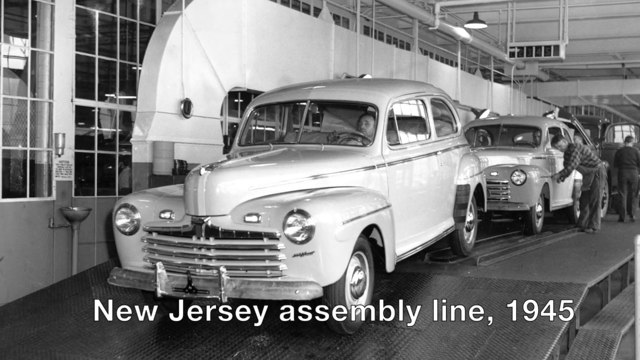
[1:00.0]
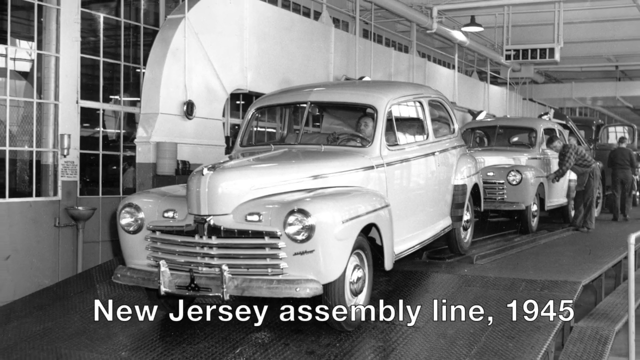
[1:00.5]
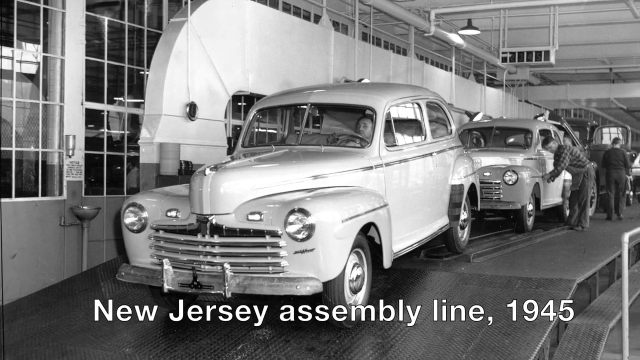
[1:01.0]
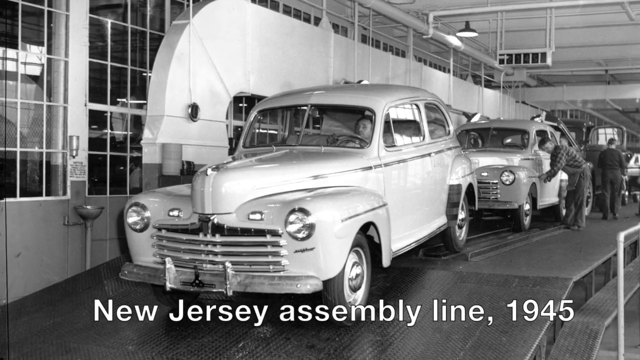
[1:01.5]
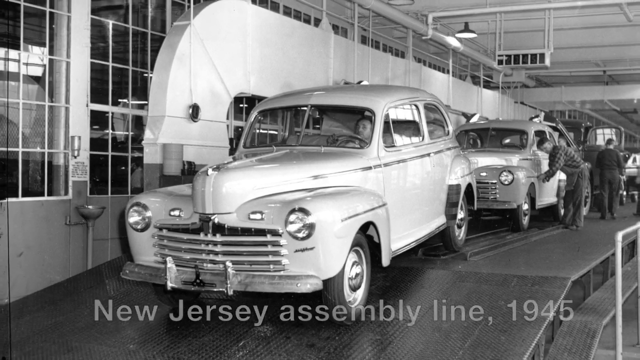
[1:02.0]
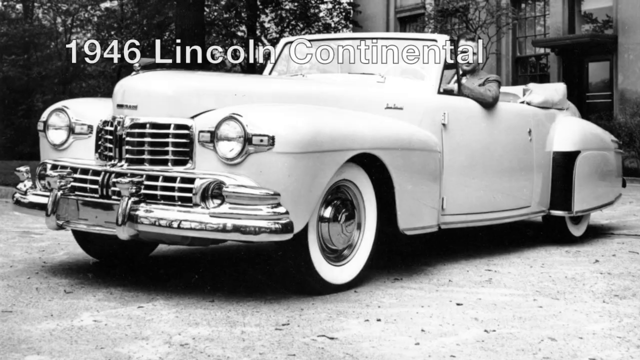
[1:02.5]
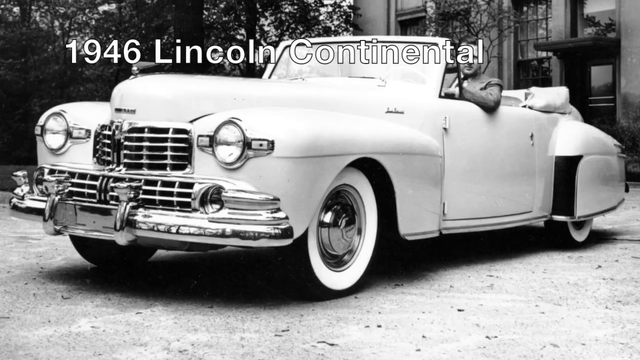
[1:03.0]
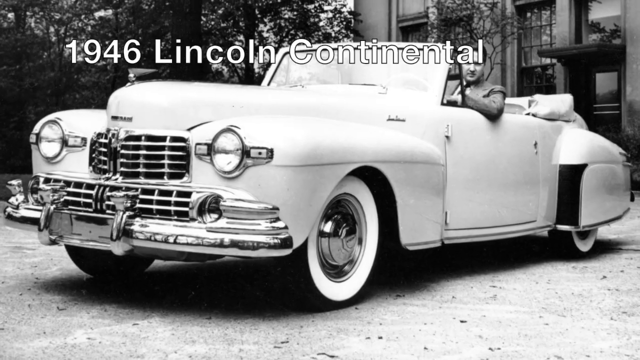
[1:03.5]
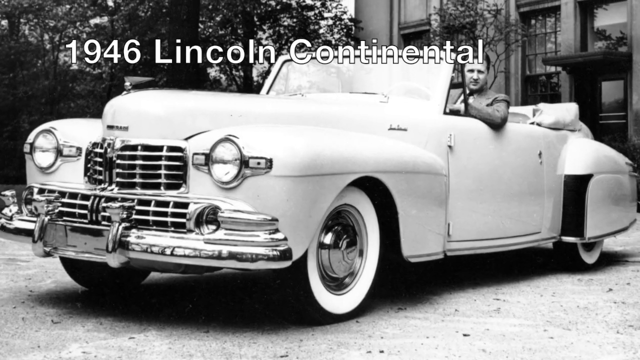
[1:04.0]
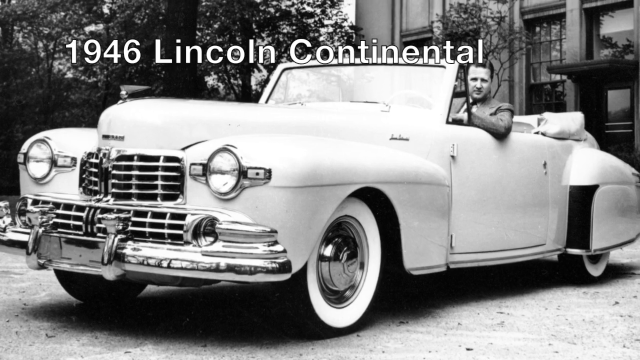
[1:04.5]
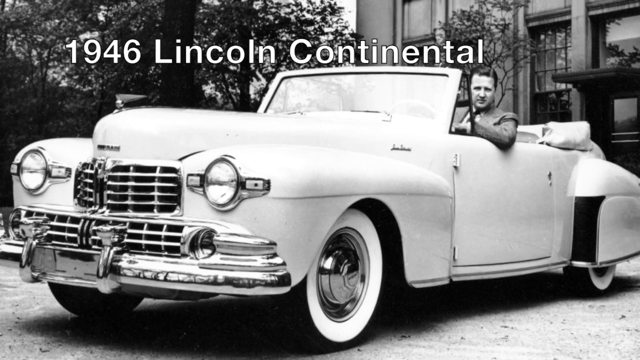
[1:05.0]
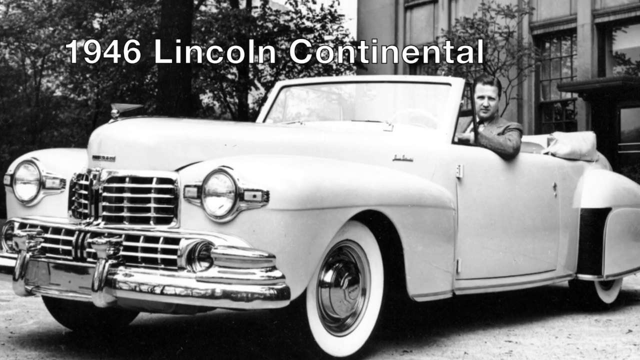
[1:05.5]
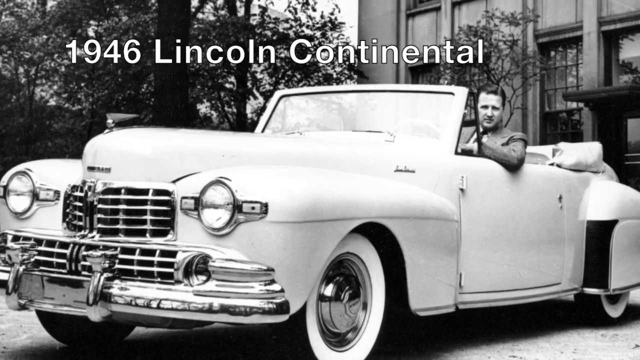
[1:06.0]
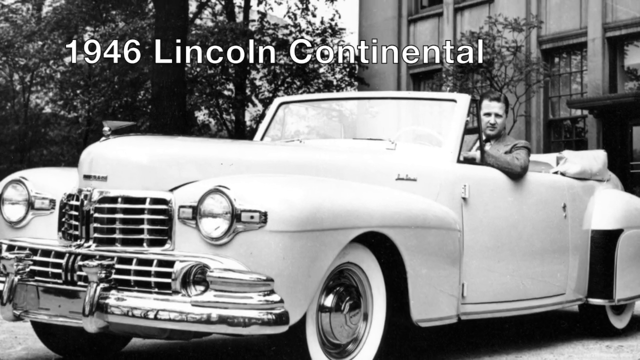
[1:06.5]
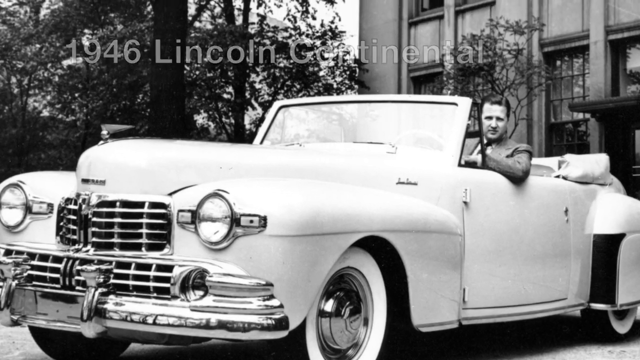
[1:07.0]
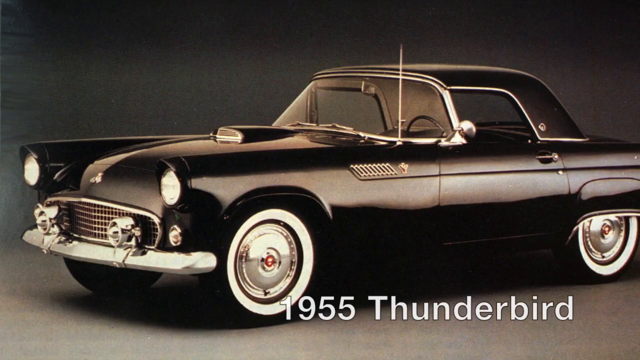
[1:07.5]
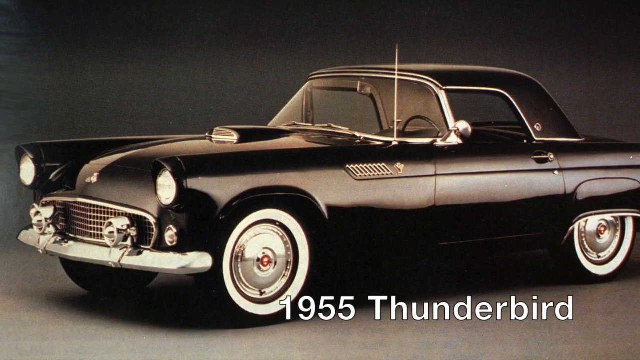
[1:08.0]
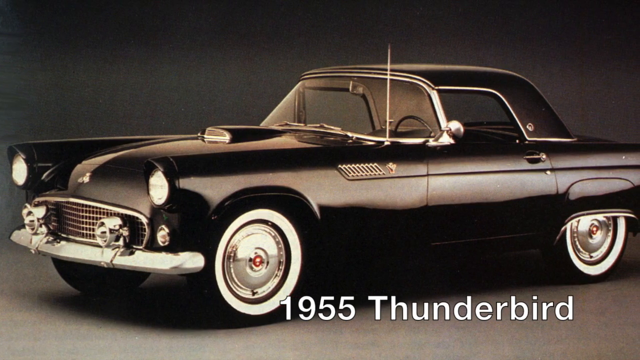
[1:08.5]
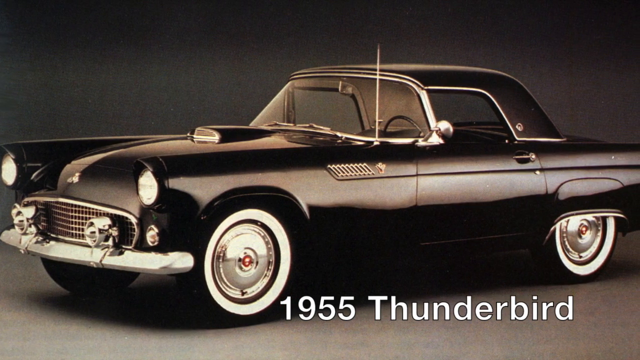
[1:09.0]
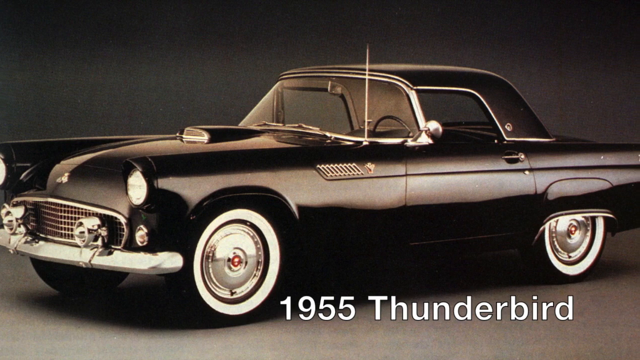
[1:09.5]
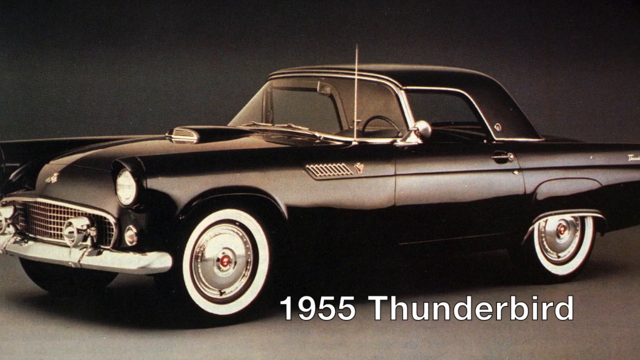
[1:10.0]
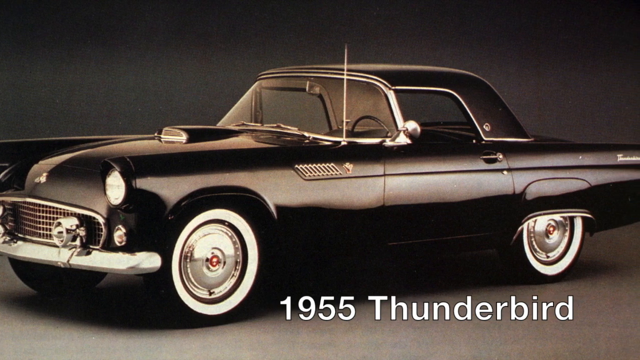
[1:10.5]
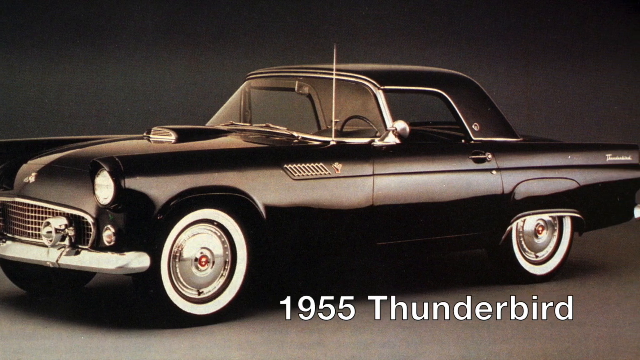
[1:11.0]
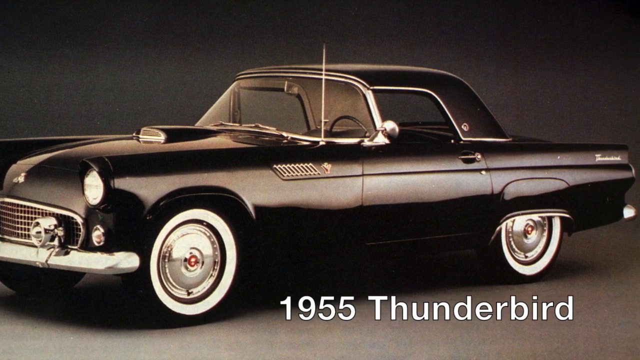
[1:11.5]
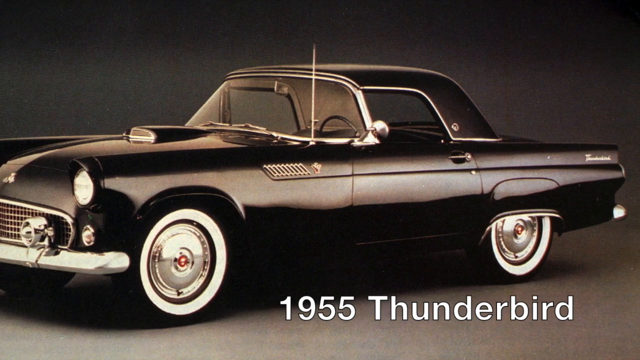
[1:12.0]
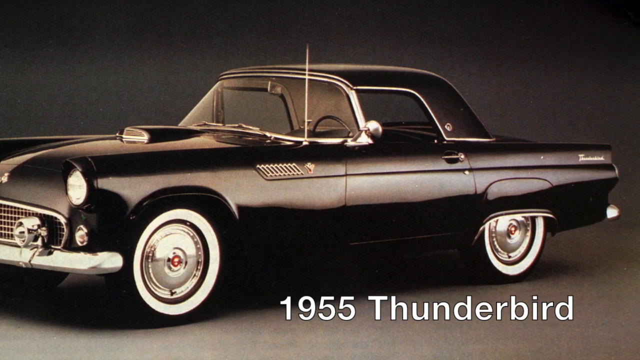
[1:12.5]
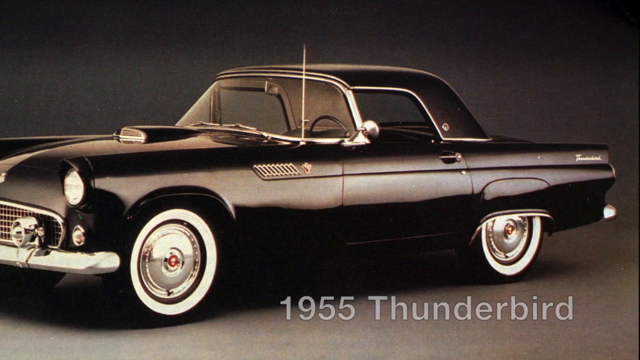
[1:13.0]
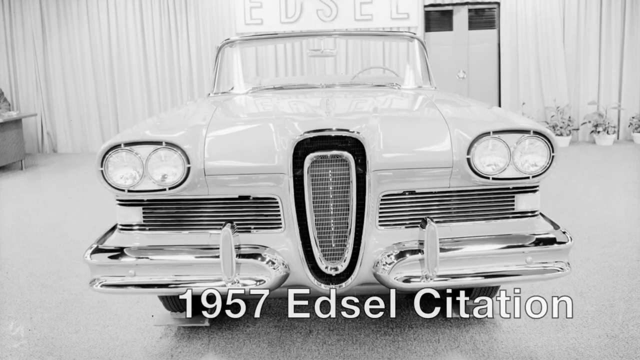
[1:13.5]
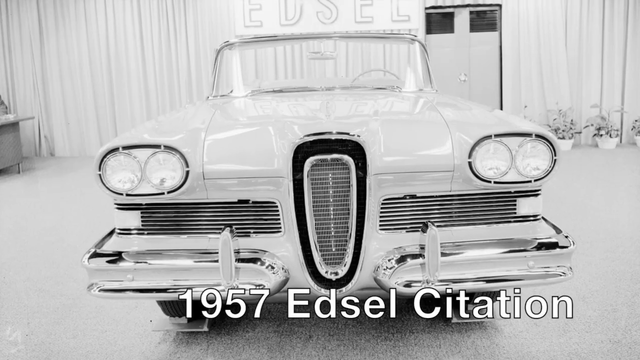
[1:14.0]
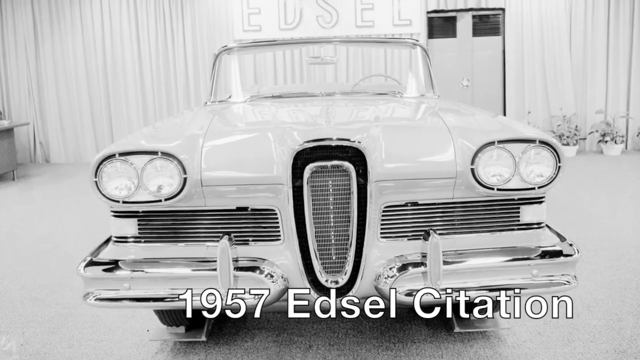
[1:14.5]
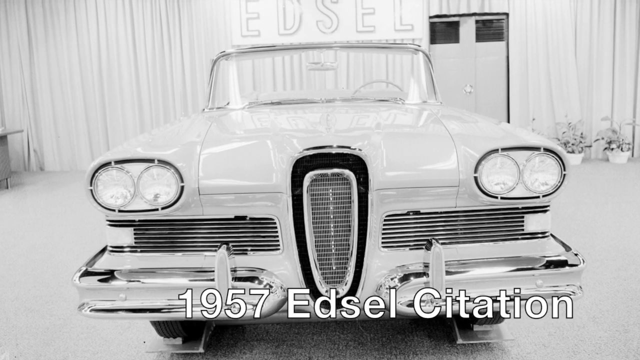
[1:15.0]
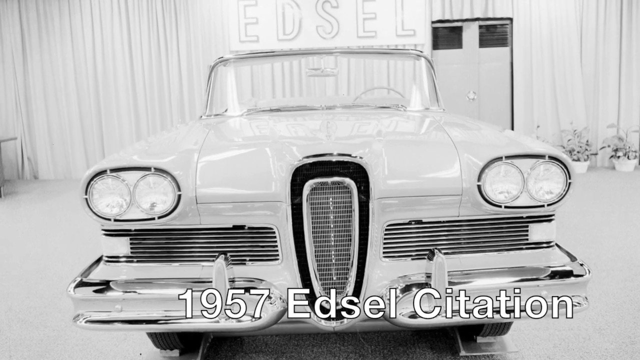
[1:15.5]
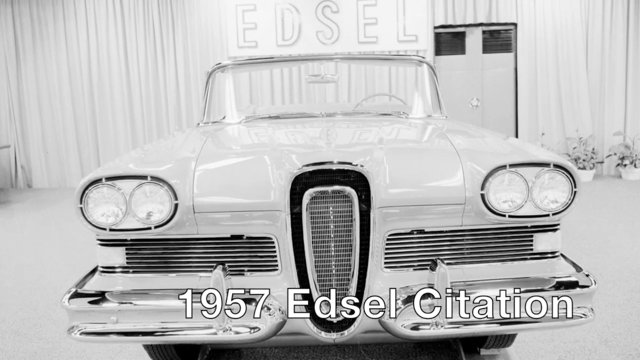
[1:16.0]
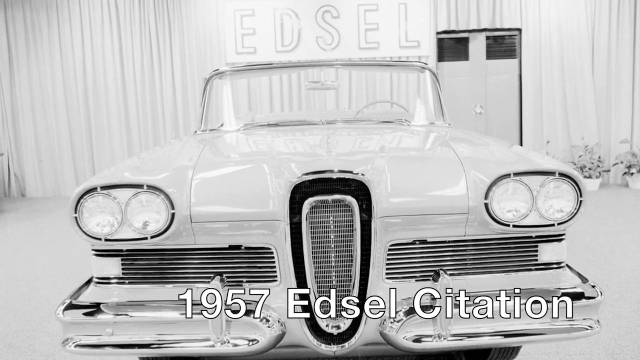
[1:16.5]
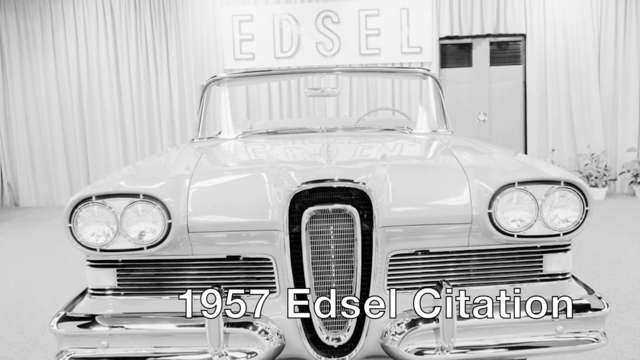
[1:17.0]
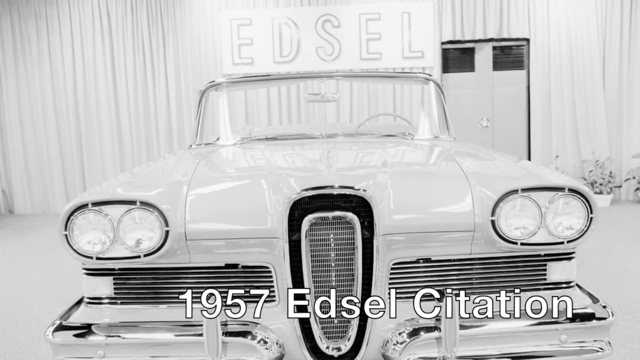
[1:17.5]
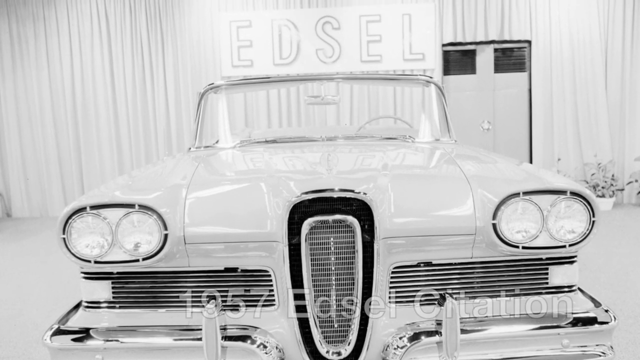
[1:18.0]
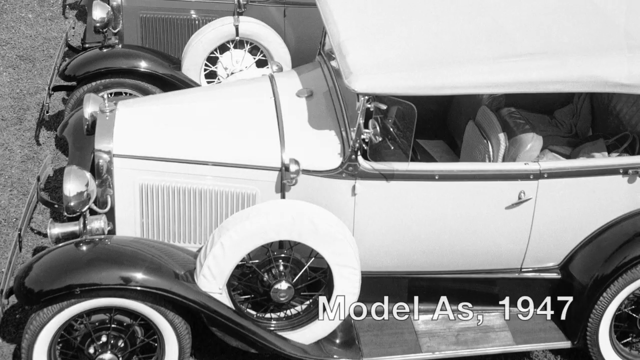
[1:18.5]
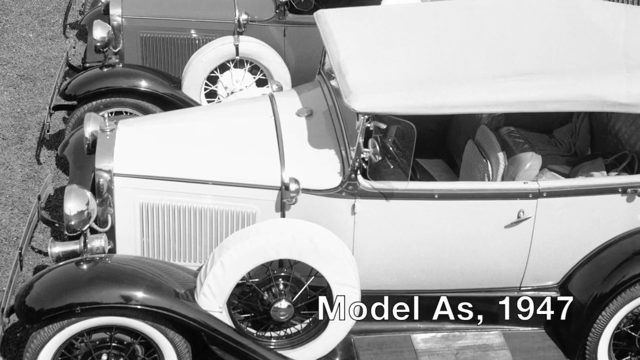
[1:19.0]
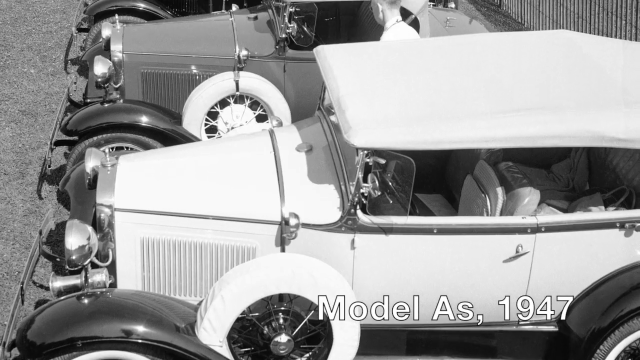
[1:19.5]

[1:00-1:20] A shot of the New Jersey assembly line from 1945 shows a couple of vehicles being worked on as they go down the line, in a well organized and clean work environment. People are behind the wheel of the cars as they are driven off the line, and as the vehicles come down the tracks, people do last-minute touch-ups and buffing. The images then segue to other vehicles: a fairly large 1946 Lincoln Continental, a quite compact black 1955 Thunderbird, a 1957 Edsel Citation with a very unusual front dash array, twin dual headlights and the Edsel grille, and Model As circa 1947.